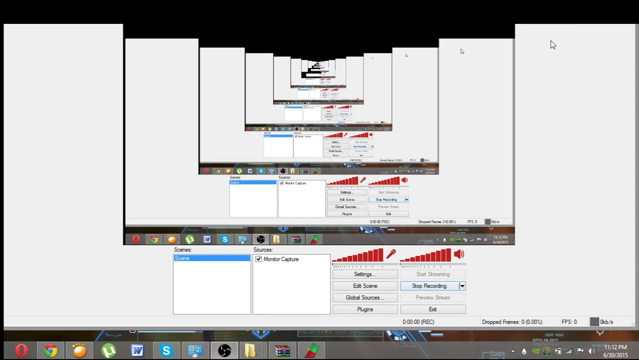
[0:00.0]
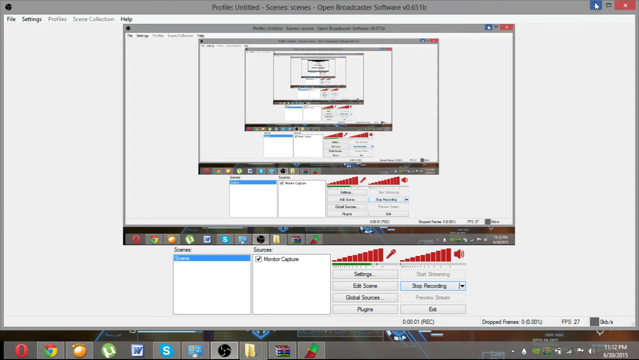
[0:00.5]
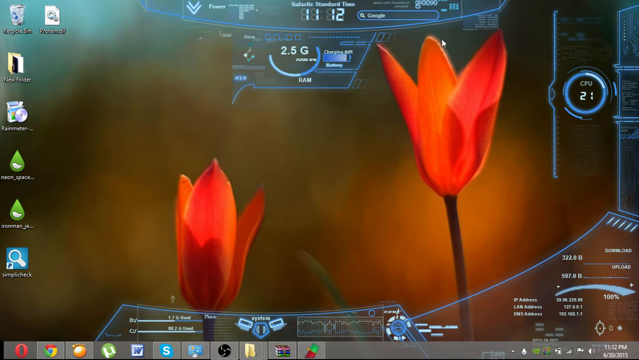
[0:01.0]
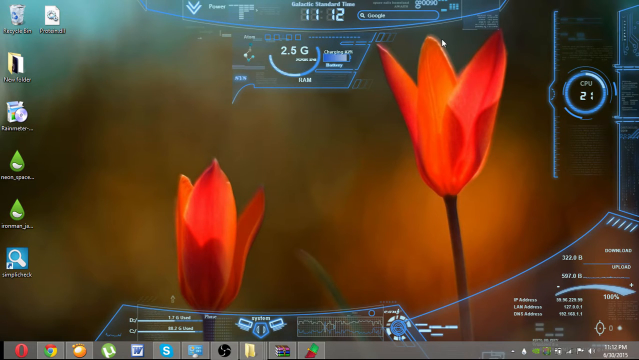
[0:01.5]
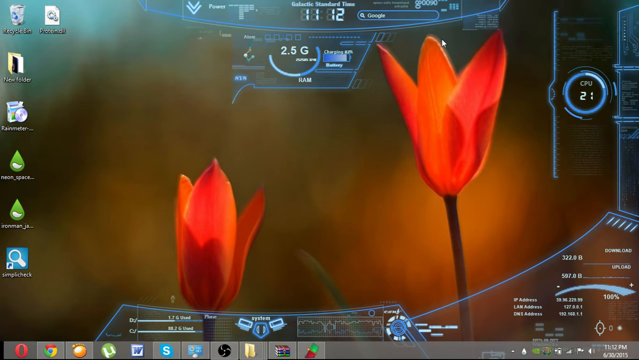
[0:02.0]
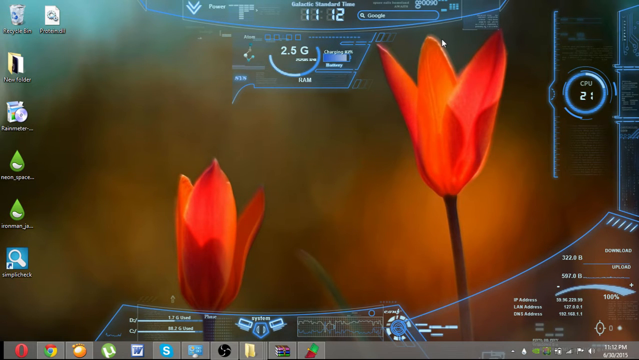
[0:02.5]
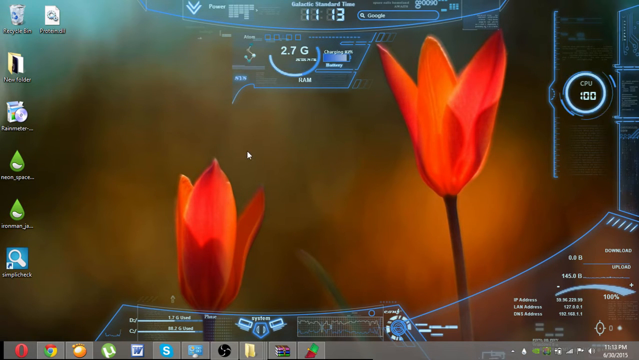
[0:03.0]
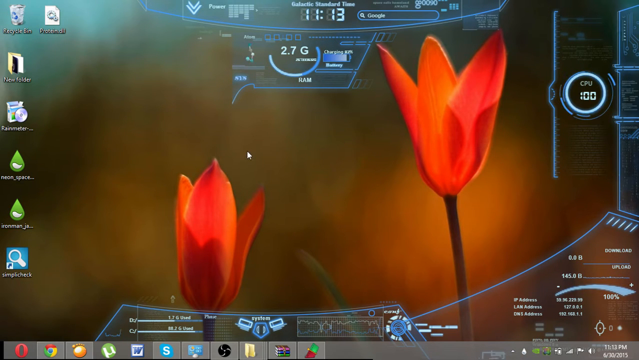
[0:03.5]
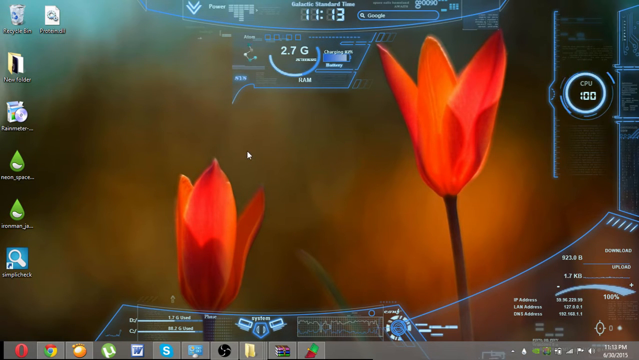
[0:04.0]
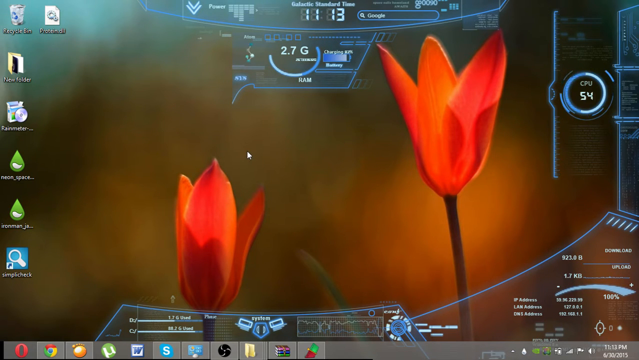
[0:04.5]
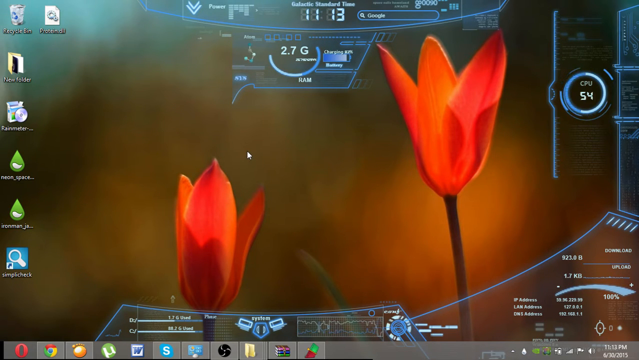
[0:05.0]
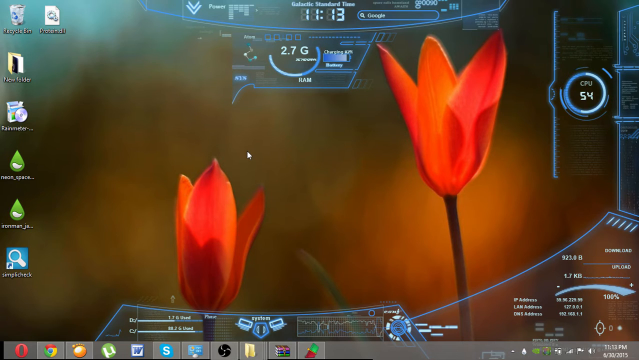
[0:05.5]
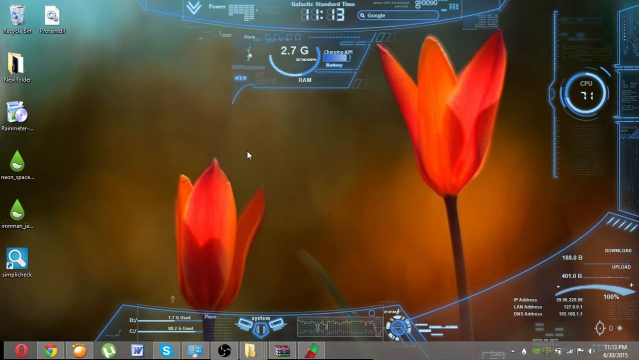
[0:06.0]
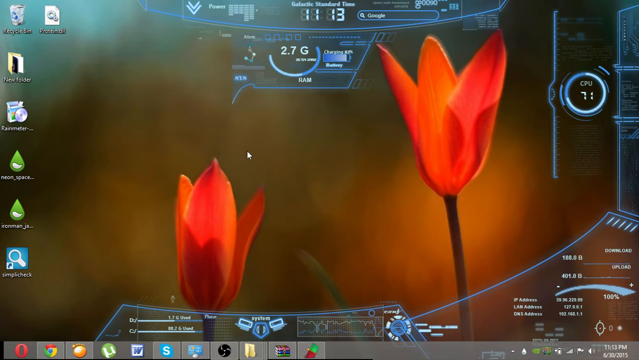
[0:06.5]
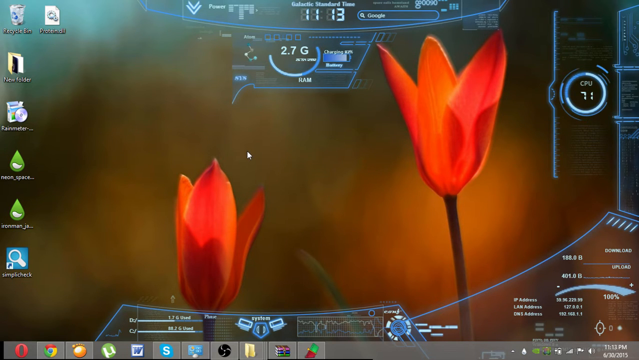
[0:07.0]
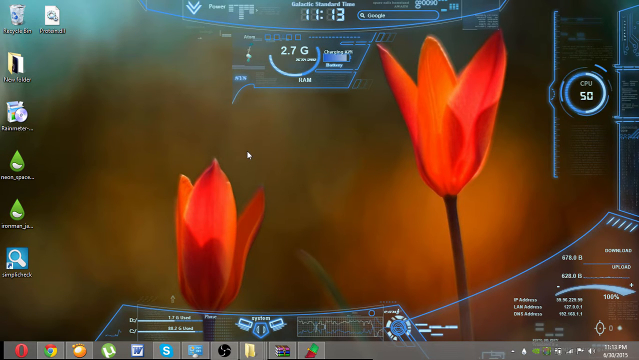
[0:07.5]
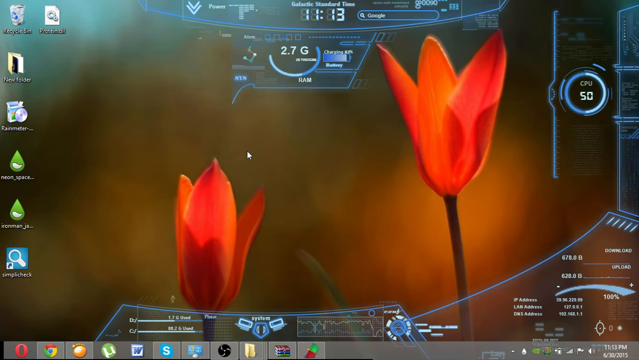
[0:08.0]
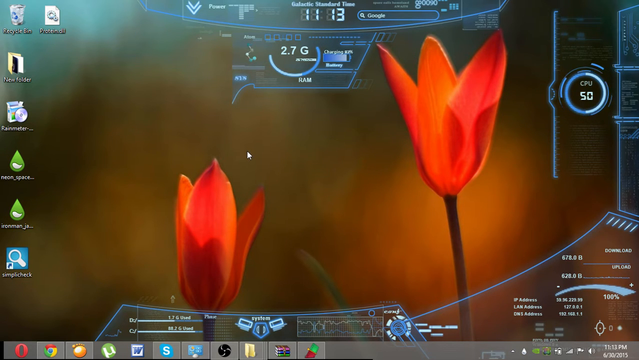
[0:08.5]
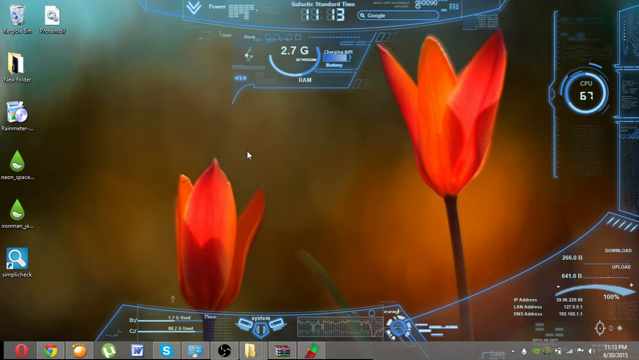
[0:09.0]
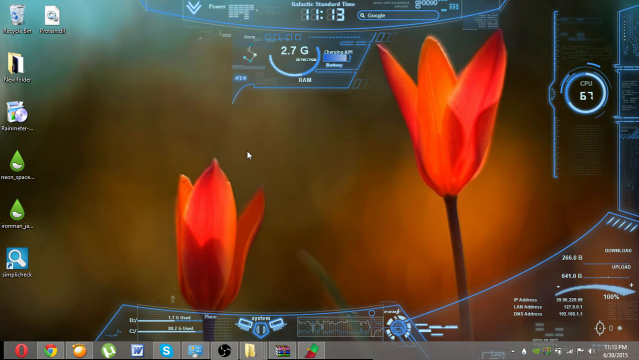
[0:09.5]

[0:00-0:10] This is a screencast. It appears to start with an image of the screencasting tool, opening with a screen-within-a-screen effect as smaller and smaller screens appear inside each other, creating a tunnel-of-mirrors effect. This quickly disappears, revealing a Windows desktop. The desktop is sparsely populated, with a background of orange tulips artistically displayed. A white mouse cursor moves across the screen. Various CPU tools installed on the screen are visible, including what appears to be some kind of cockpit-style CPU monitor showing the processor running at 2.7 gigahertz and the current time as 11.13. The taskbar has various tools on it, including the Chrome and Opera browsers.